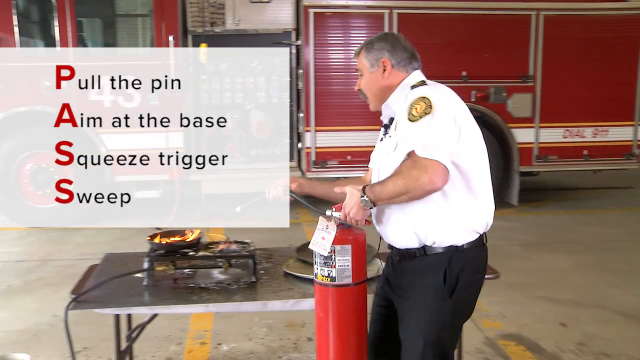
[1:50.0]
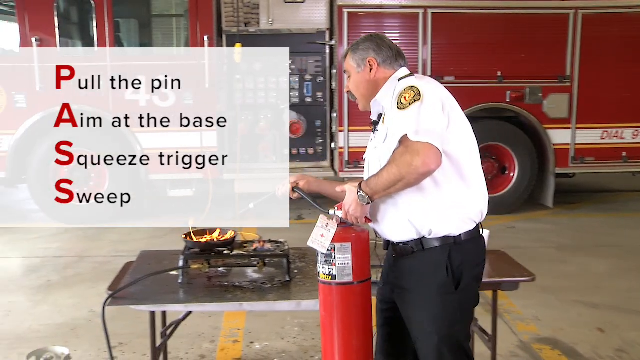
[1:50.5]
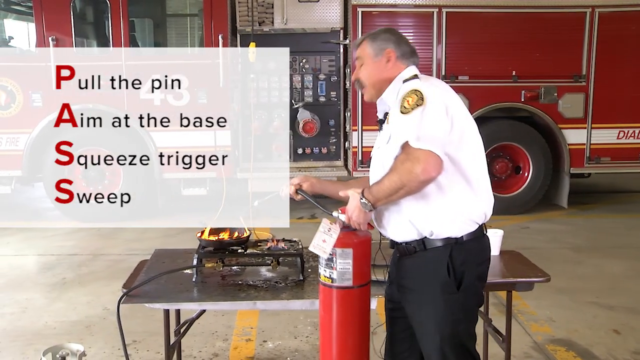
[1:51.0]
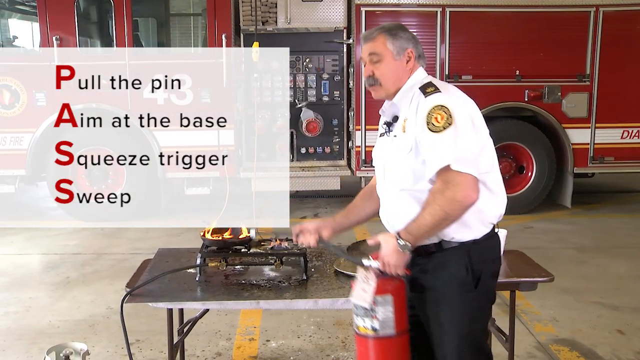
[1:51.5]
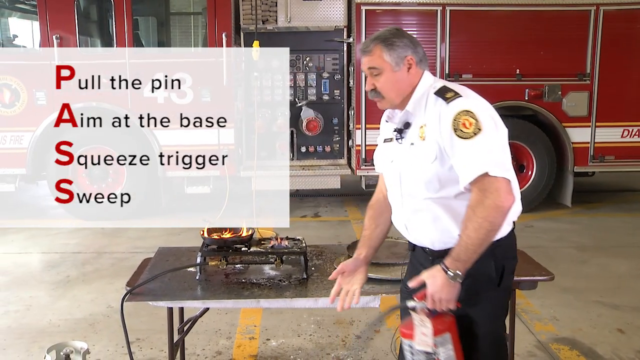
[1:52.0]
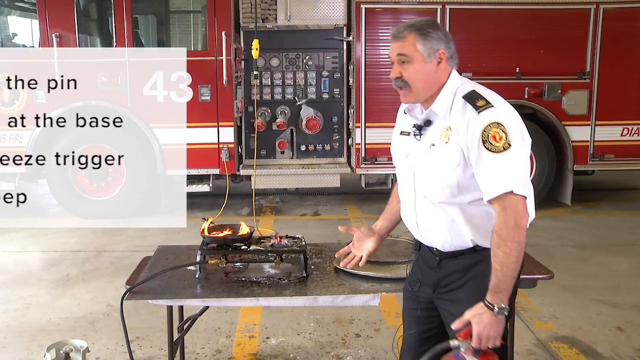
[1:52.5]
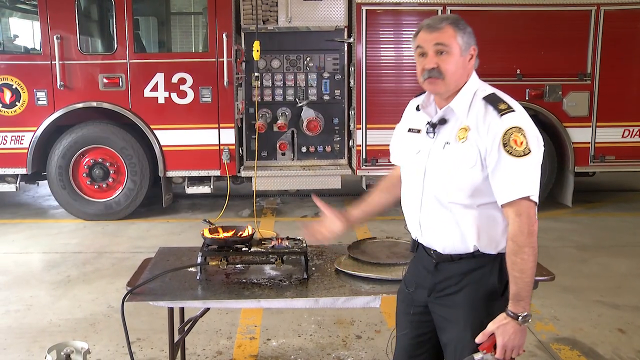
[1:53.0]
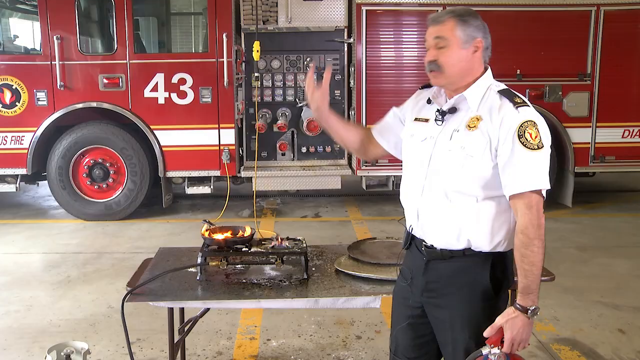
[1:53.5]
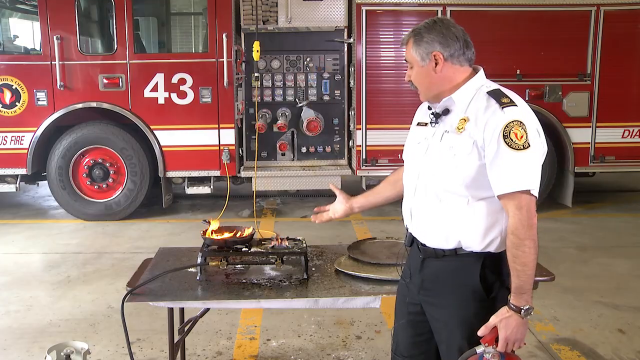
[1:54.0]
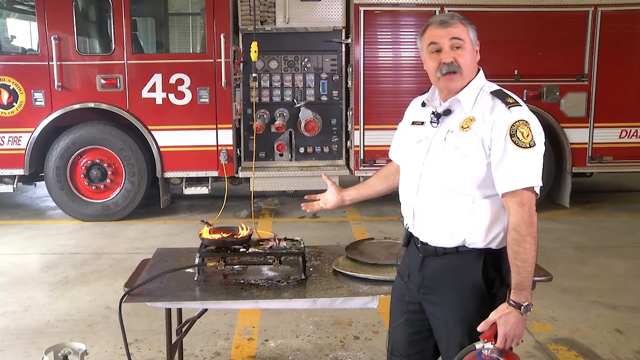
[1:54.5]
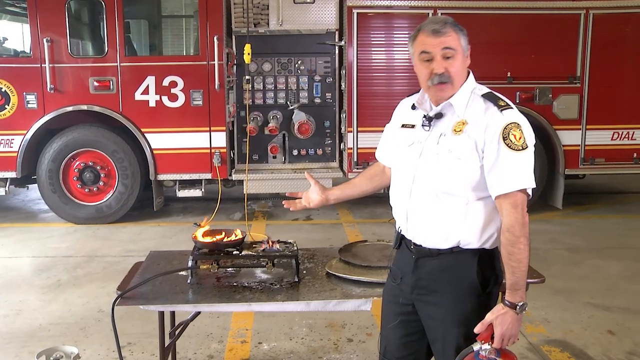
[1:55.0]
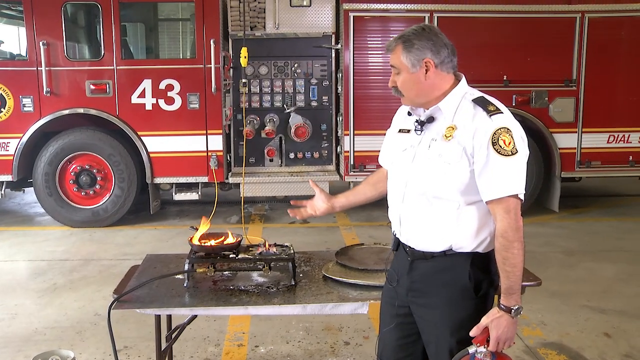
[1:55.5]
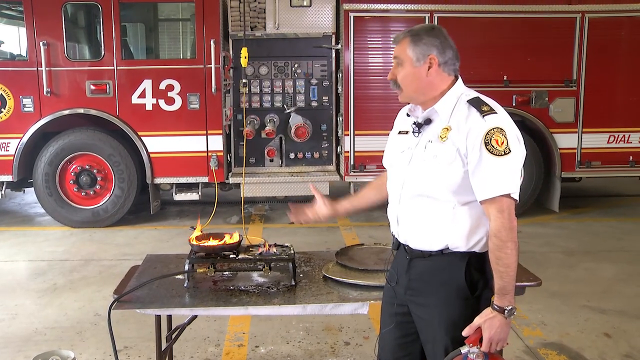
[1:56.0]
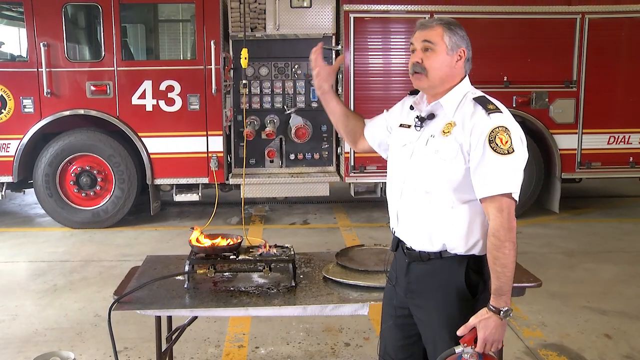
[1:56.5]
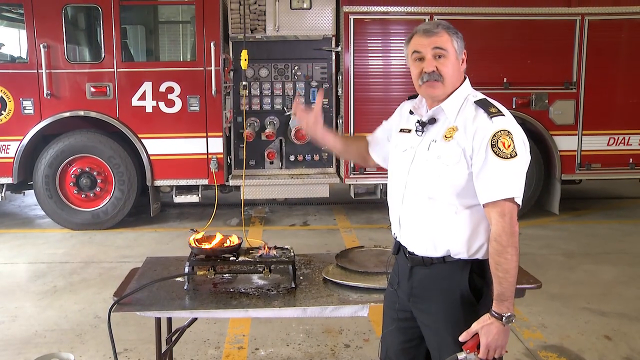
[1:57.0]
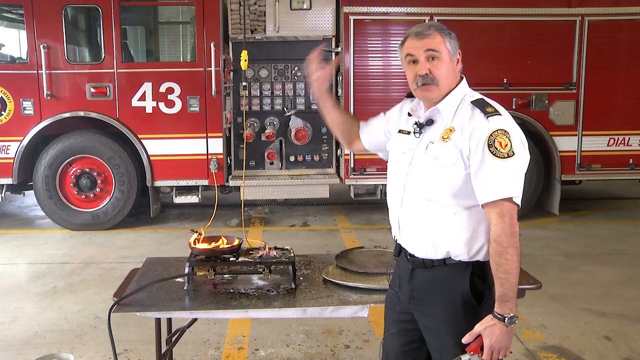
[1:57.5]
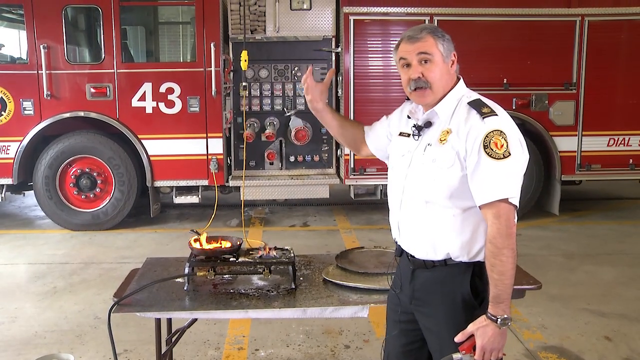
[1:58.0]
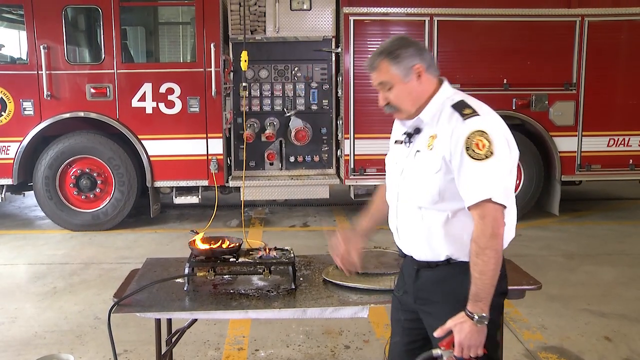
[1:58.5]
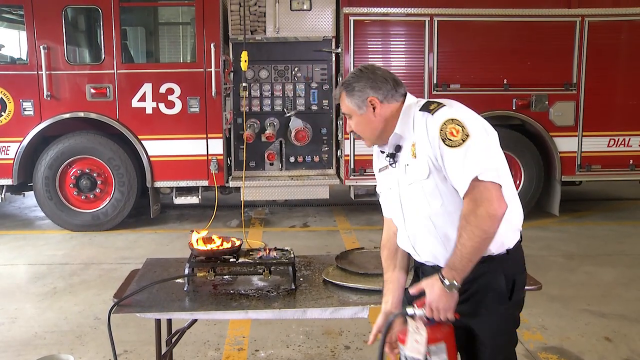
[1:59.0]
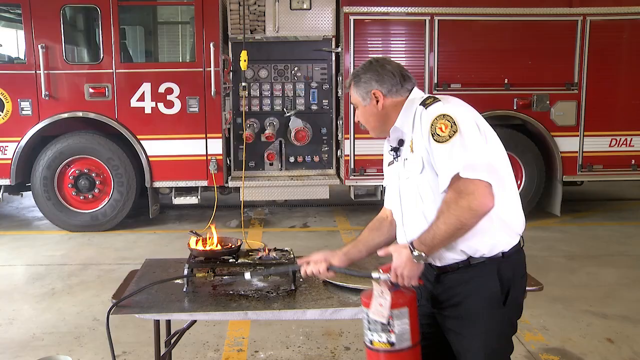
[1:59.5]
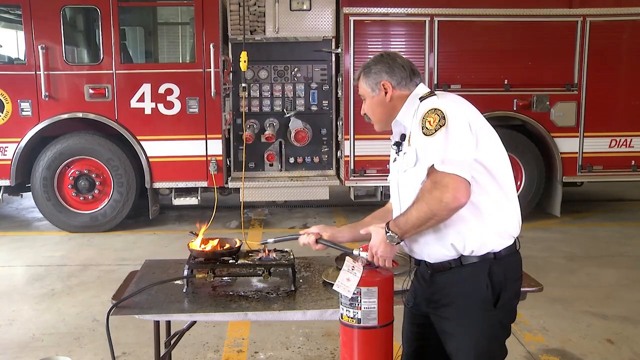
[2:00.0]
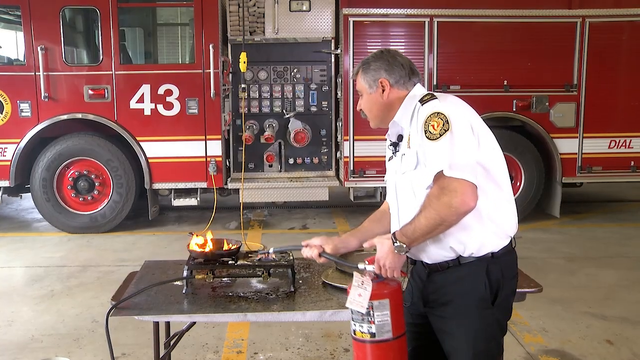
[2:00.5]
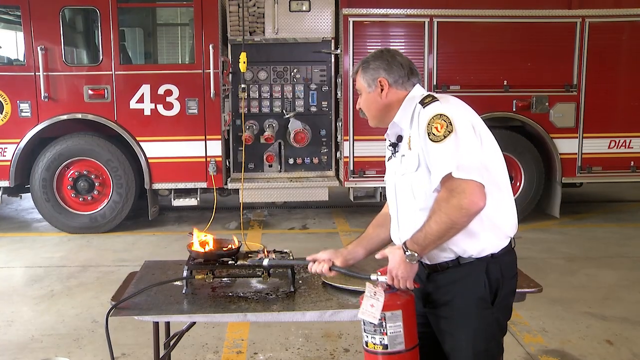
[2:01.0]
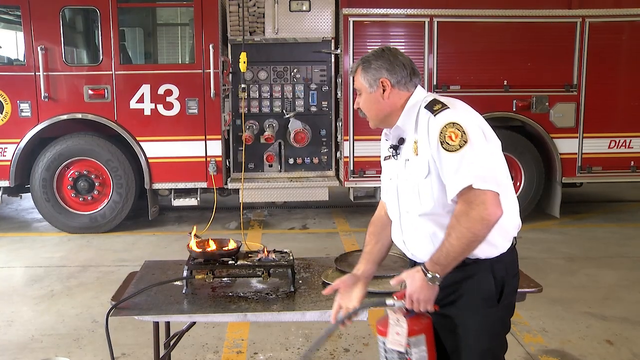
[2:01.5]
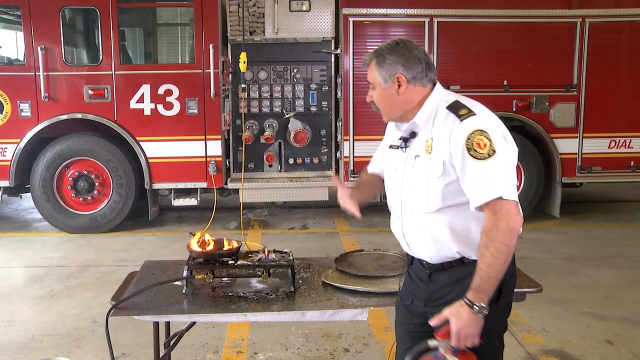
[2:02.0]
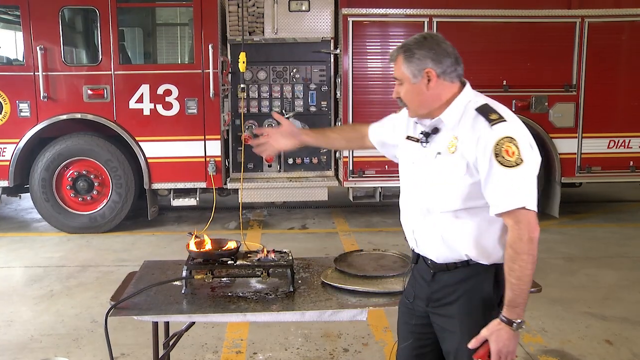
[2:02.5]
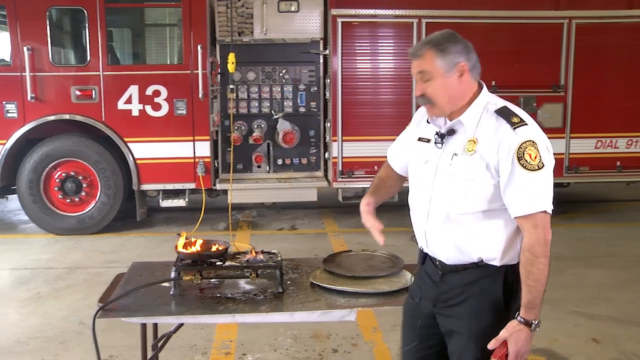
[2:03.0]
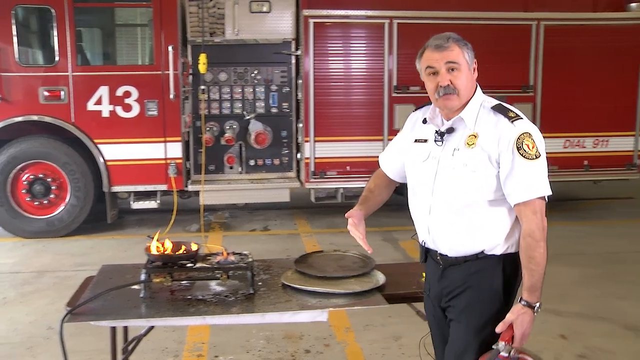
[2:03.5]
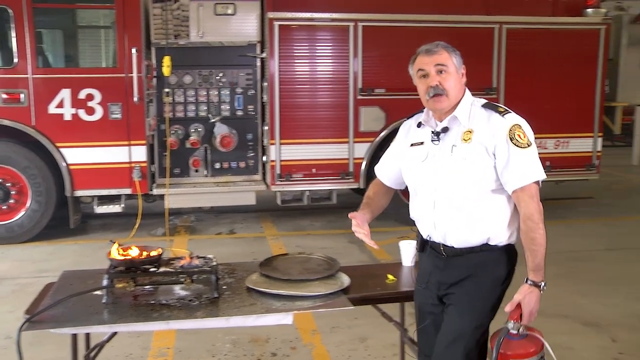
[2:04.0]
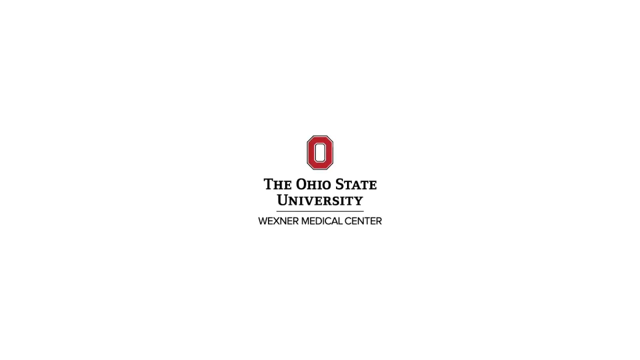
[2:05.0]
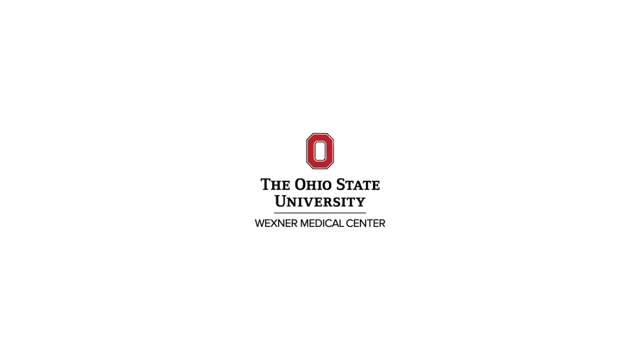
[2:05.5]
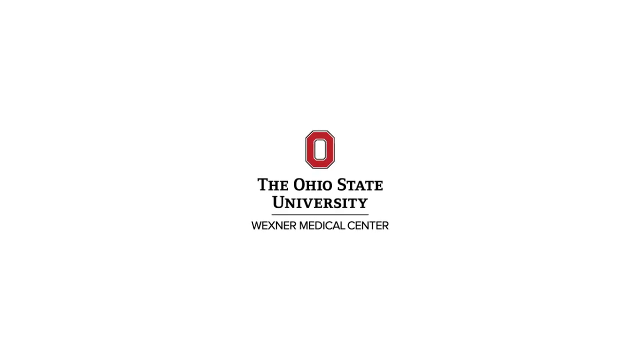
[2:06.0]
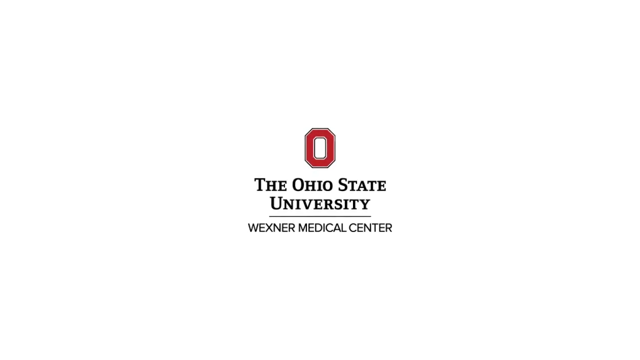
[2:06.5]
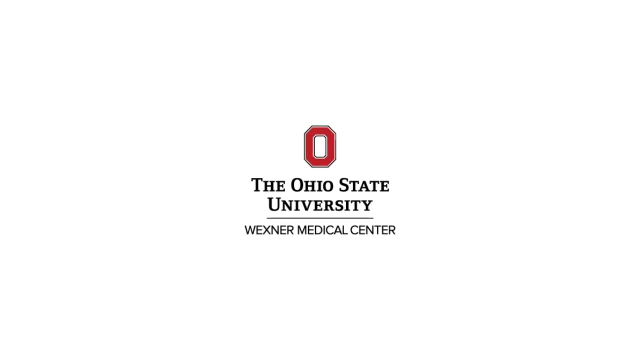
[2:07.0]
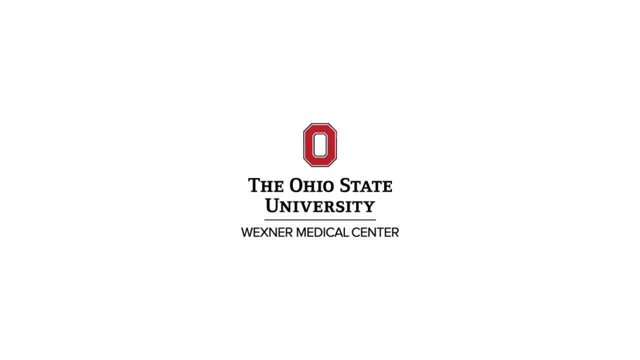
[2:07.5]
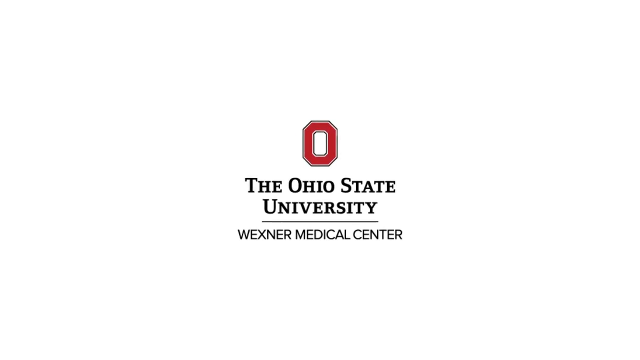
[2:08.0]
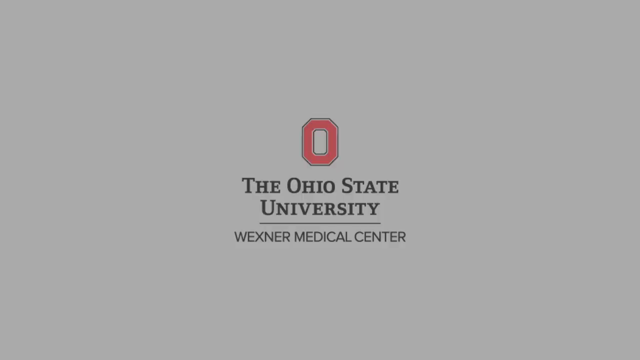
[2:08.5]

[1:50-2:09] The PASS graphics slide off to the left. The man has stepped closer, and the fire is still burning. He directs the nozzle, making large angular, directional motions with his right hand, but he does not pull the trigger. He is an older man, probably in his late 50s or early 60s, and kind of portly. At the end, a graphic for the Ohio State University Wexner Medical Center appears.